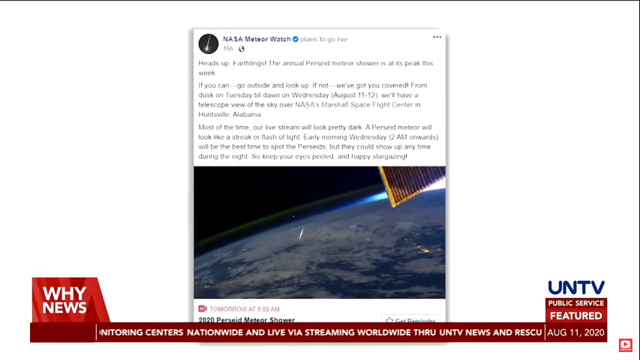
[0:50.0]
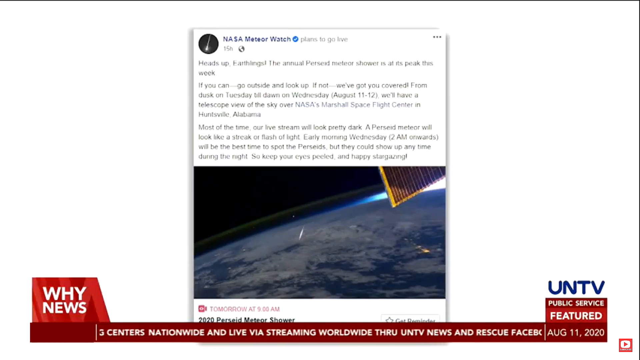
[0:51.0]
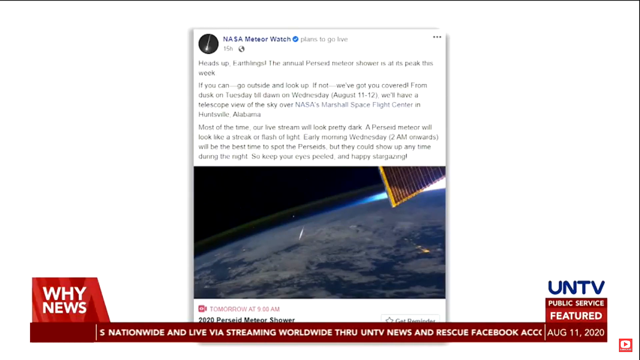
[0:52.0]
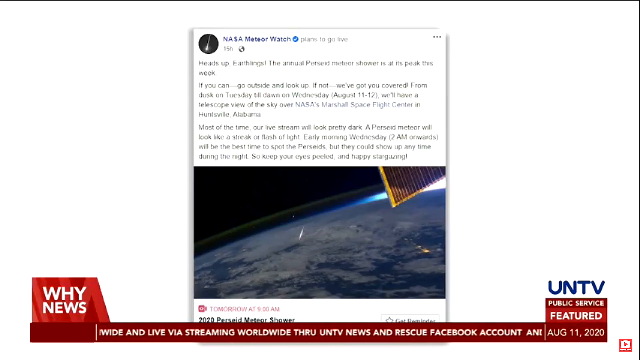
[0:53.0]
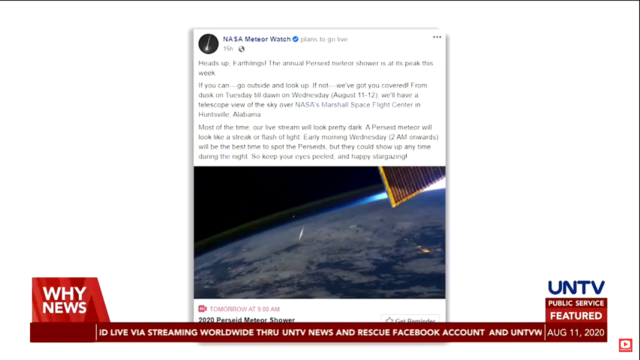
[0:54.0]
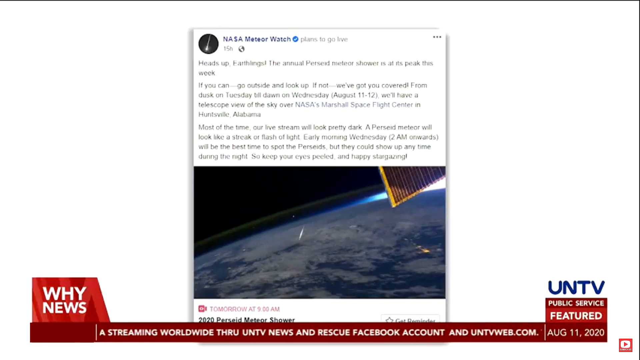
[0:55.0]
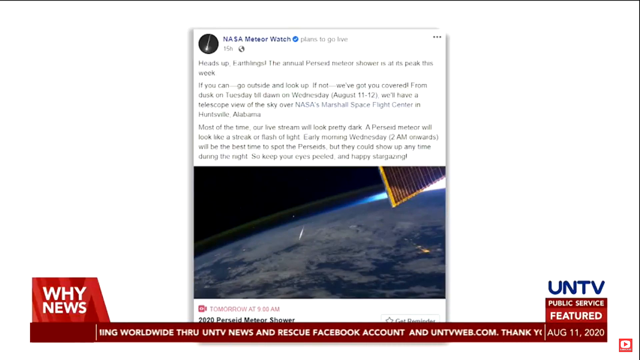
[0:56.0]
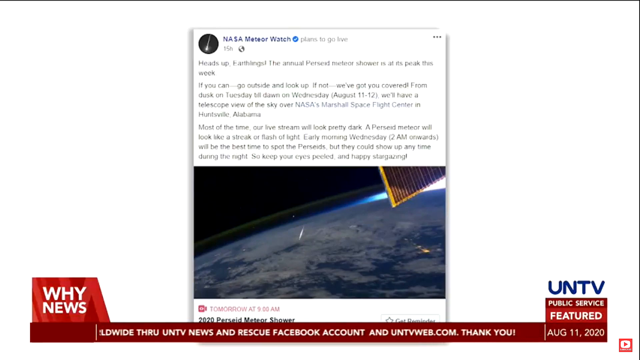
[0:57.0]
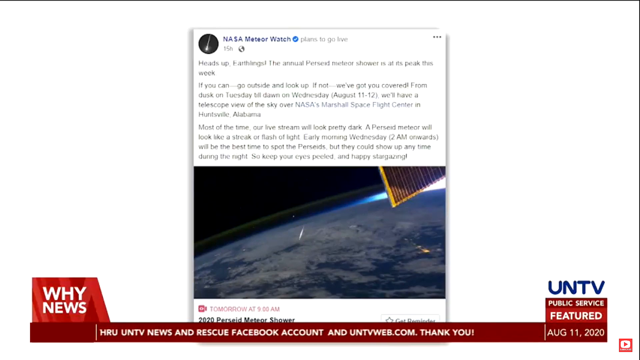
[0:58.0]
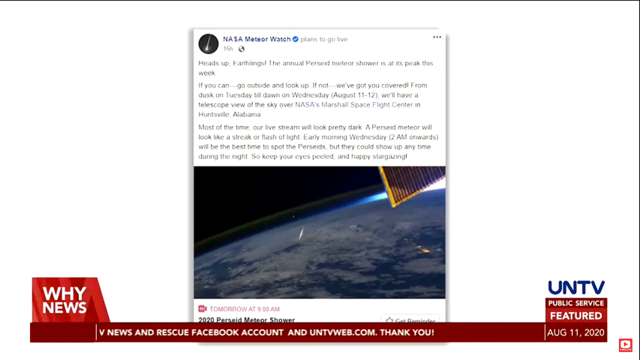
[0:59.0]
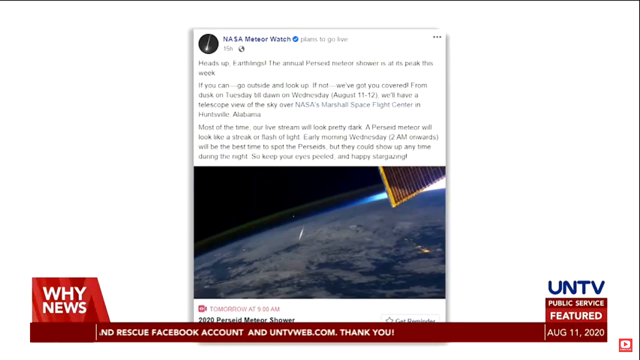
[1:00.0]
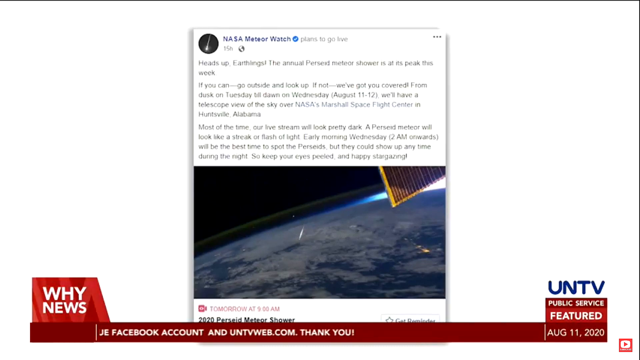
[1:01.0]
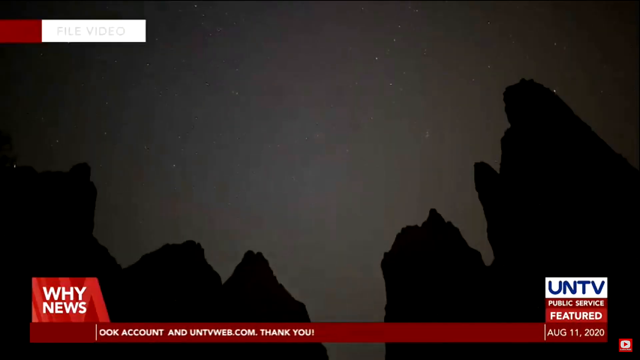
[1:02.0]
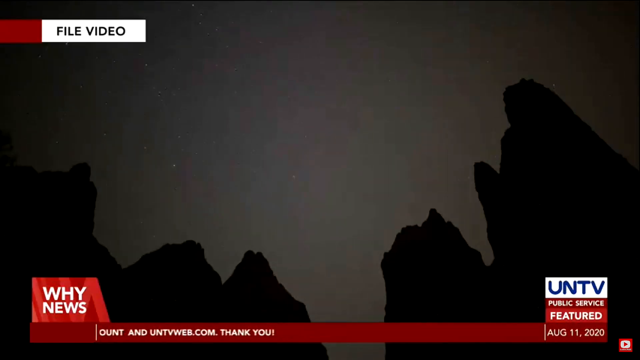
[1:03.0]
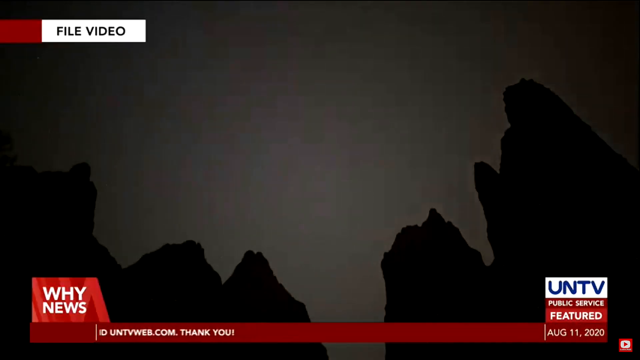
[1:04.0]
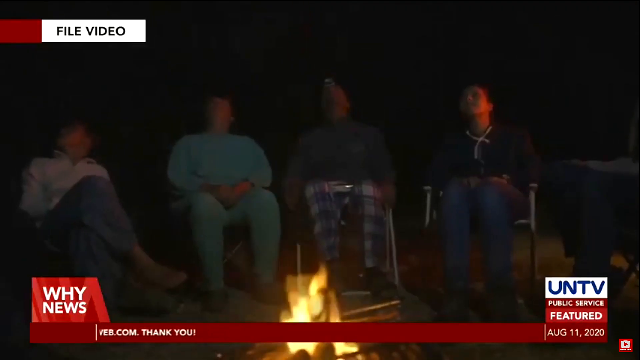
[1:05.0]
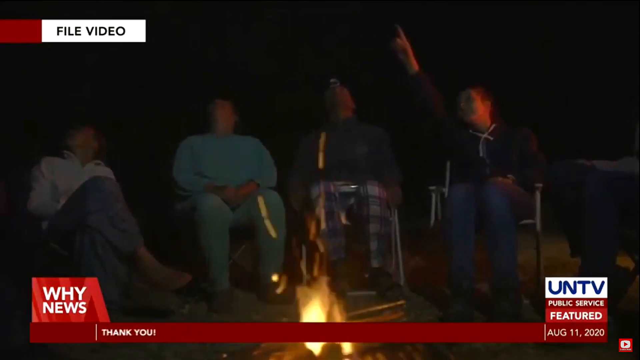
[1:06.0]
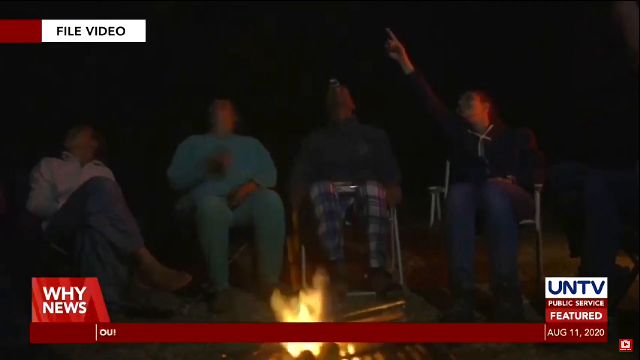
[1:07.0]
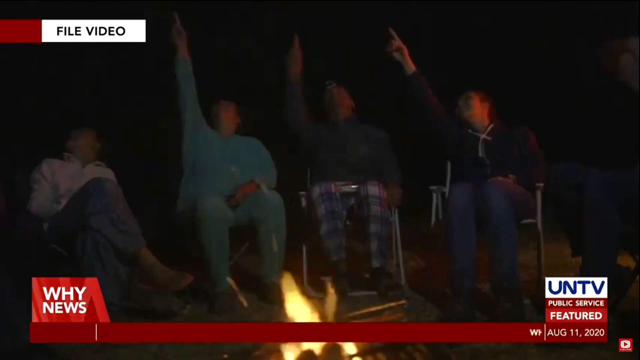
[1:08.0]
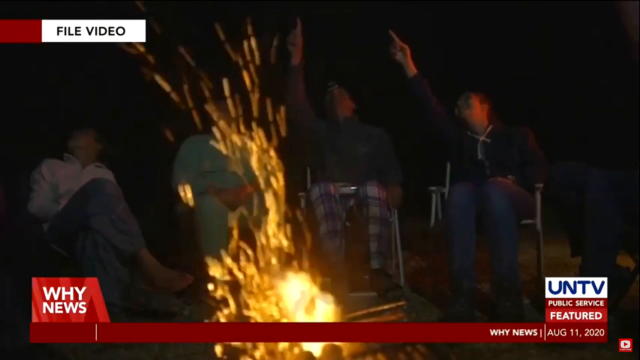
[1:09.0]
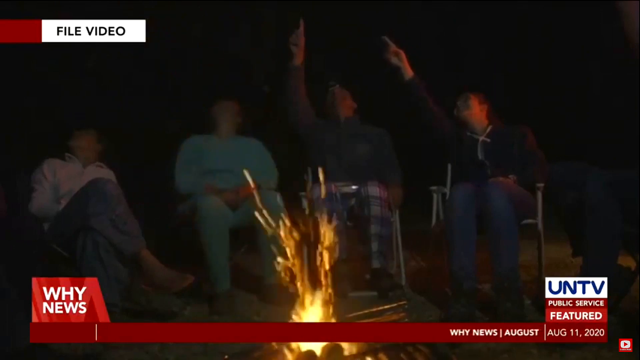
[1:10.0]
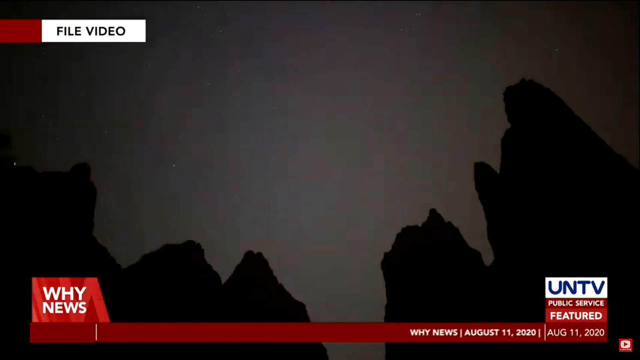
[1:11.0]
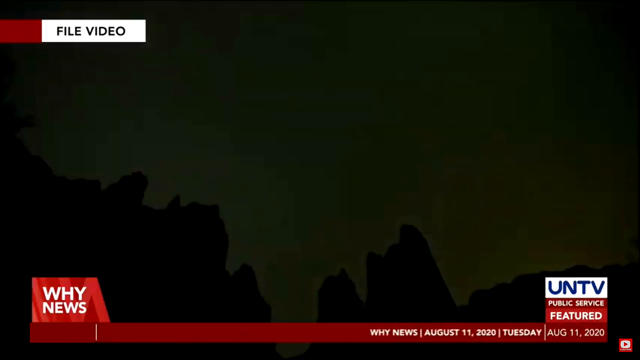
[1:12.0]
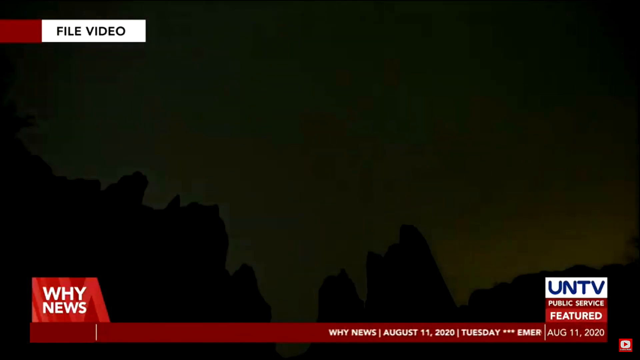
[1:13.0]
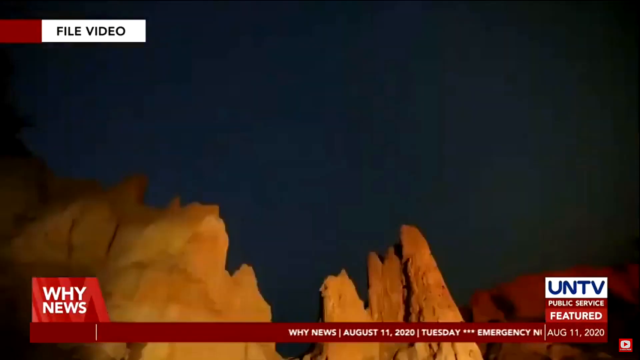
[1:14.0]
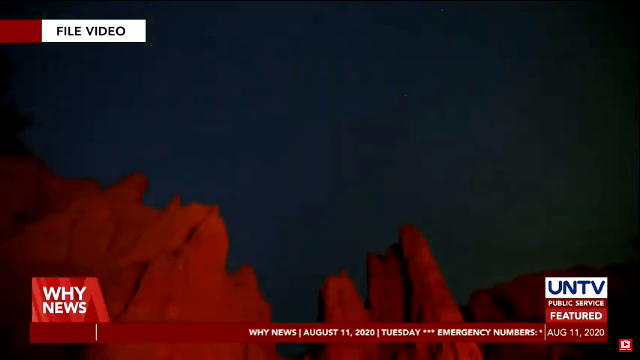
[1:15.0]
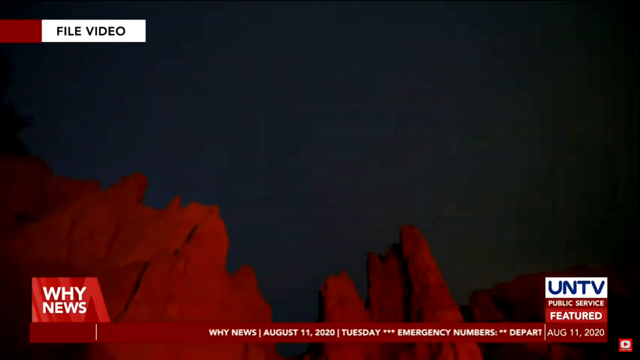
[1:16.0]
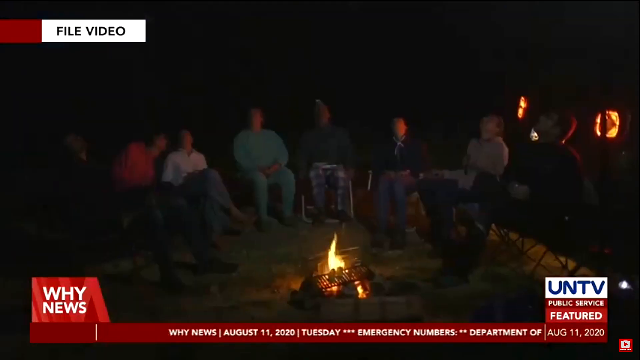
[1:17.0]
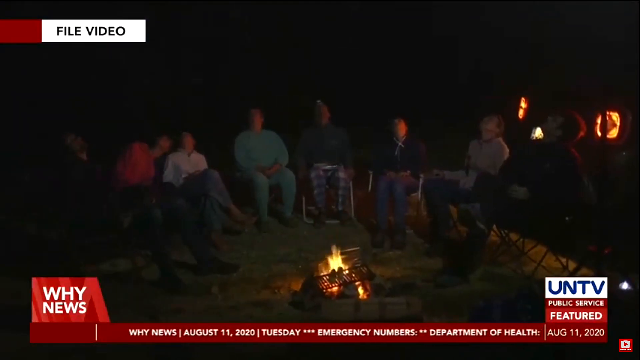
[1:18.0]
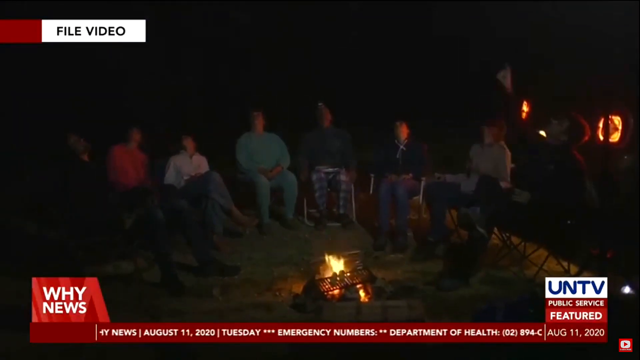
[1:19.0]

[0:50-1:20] The post notifies people that there will be a live stream and when the meteor shower is expected to appear. Many people are then shown outside, apparently sitting, with a fire in the center. Some wear pajamas, some wear sweatshirts, and some wear jeans. It seems to be cold. The people seem to be waiting for the meteor shower to appear, and they seem very happy.